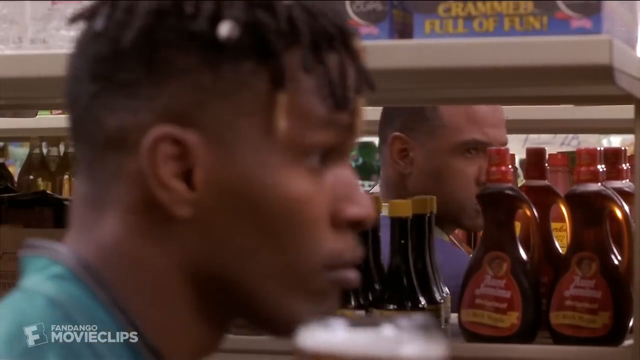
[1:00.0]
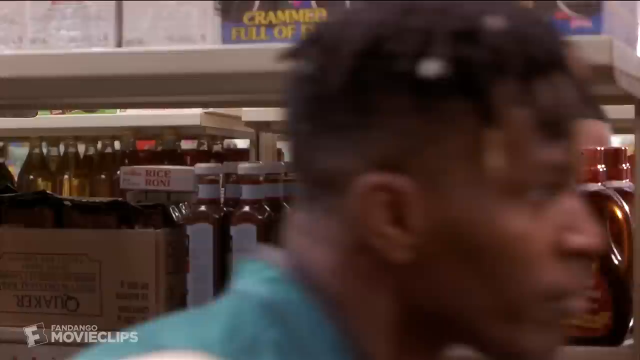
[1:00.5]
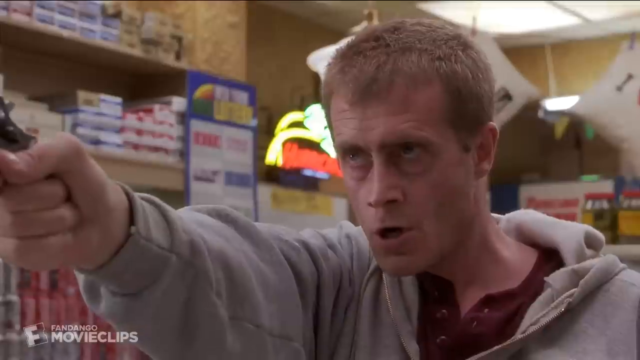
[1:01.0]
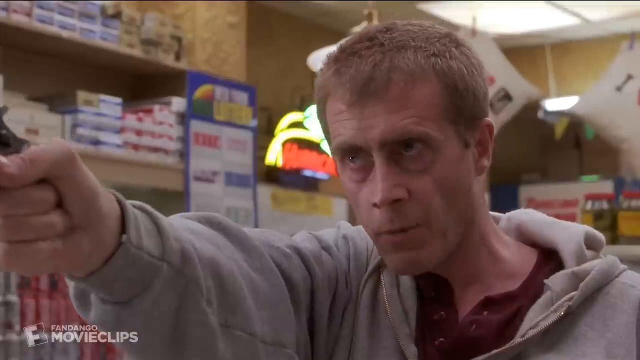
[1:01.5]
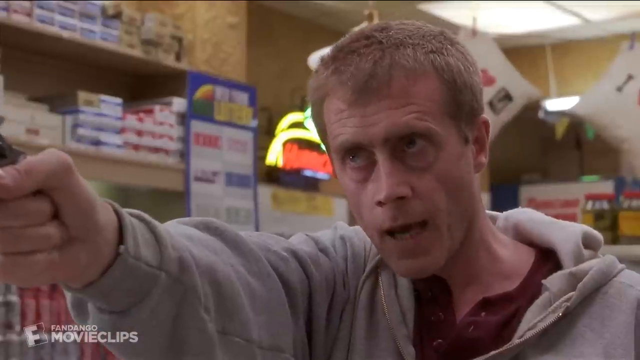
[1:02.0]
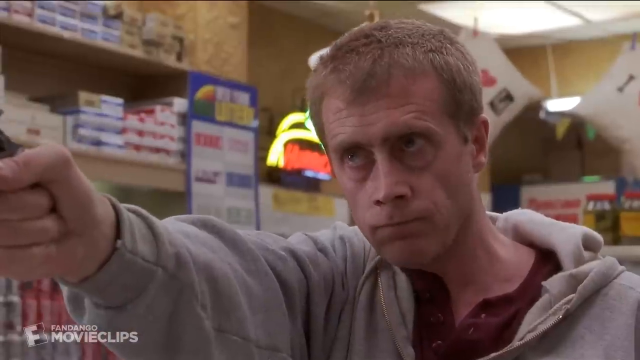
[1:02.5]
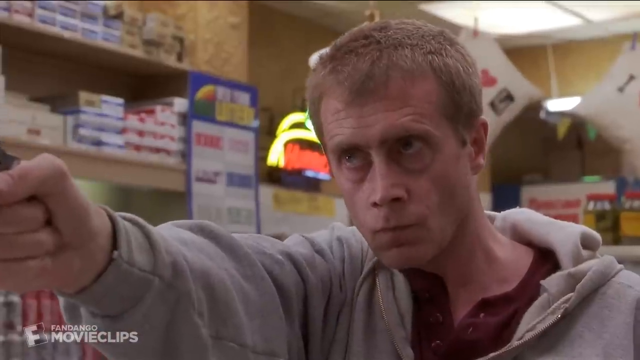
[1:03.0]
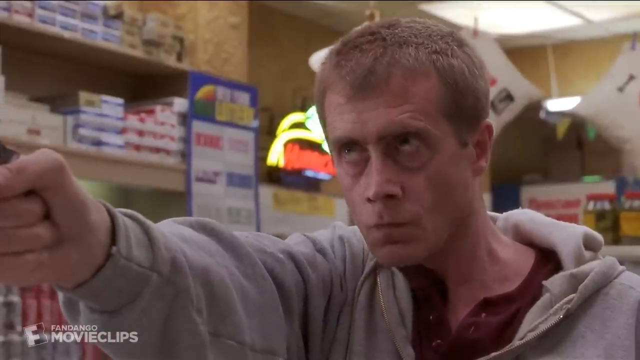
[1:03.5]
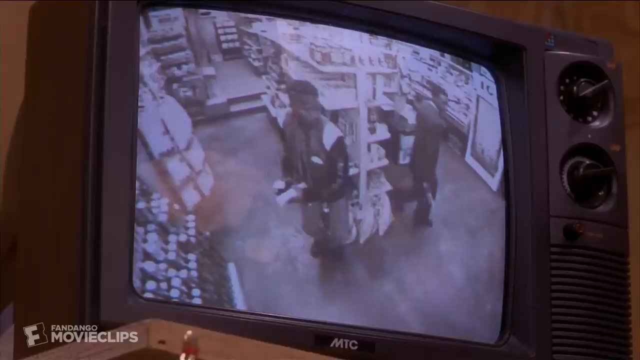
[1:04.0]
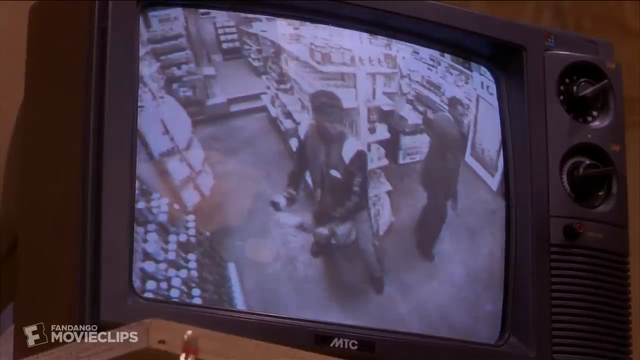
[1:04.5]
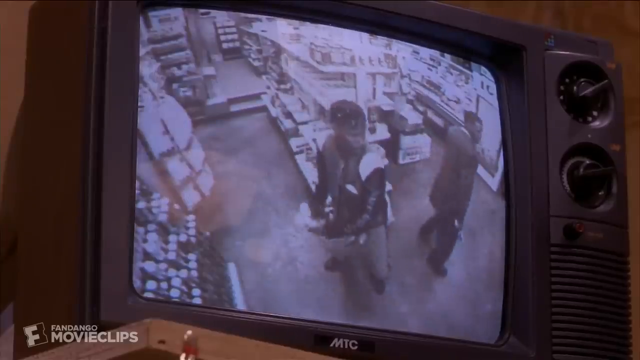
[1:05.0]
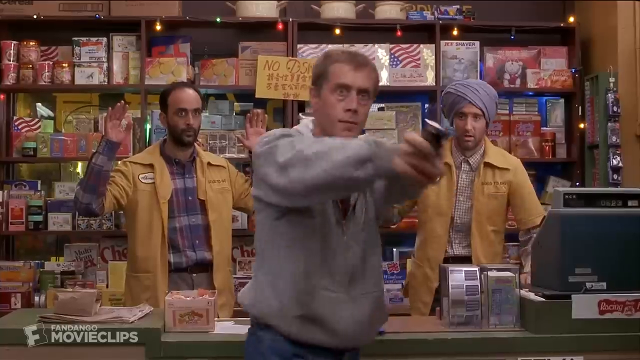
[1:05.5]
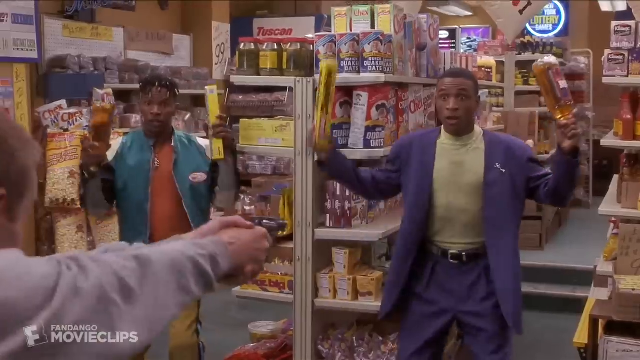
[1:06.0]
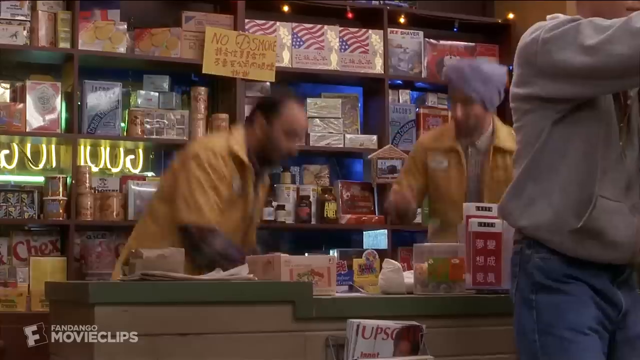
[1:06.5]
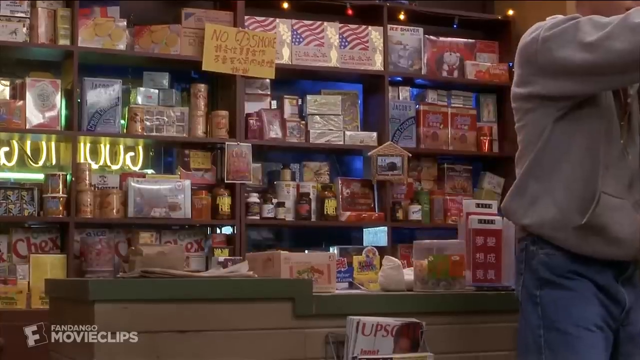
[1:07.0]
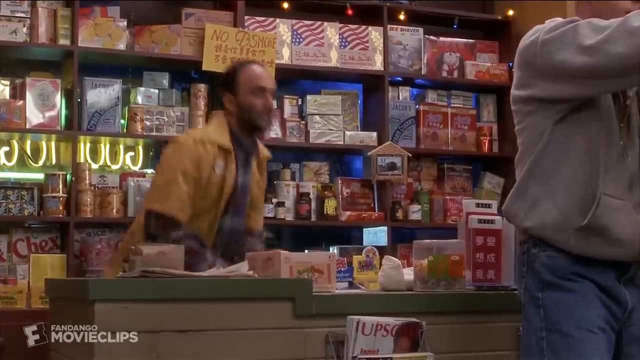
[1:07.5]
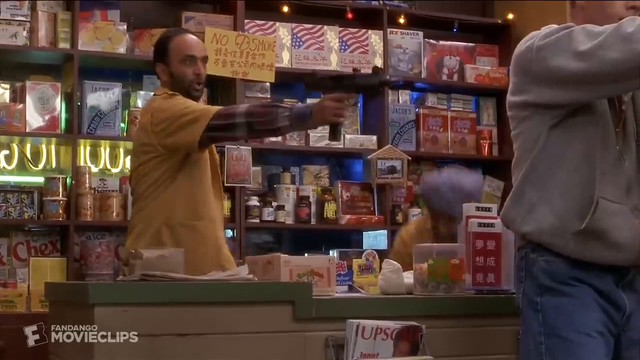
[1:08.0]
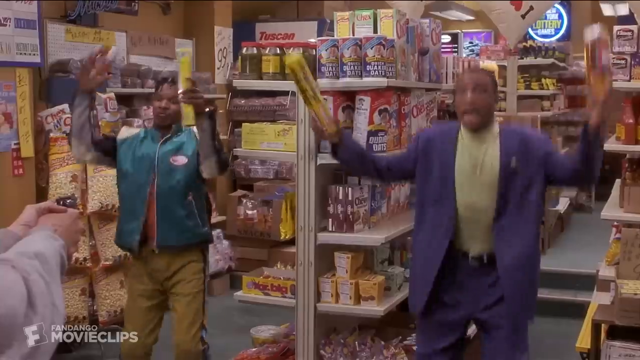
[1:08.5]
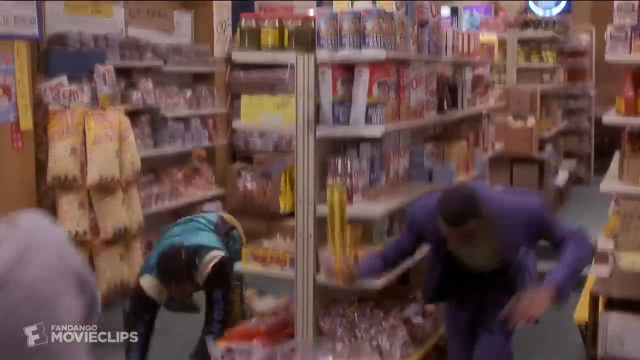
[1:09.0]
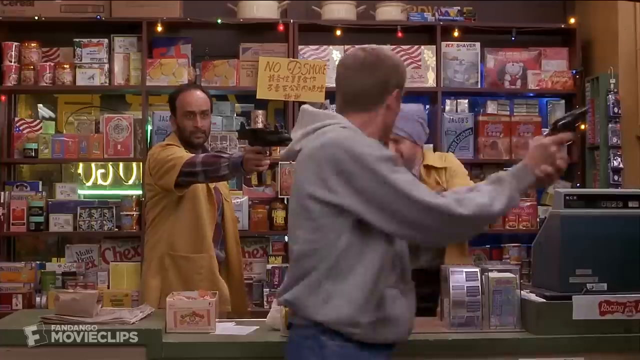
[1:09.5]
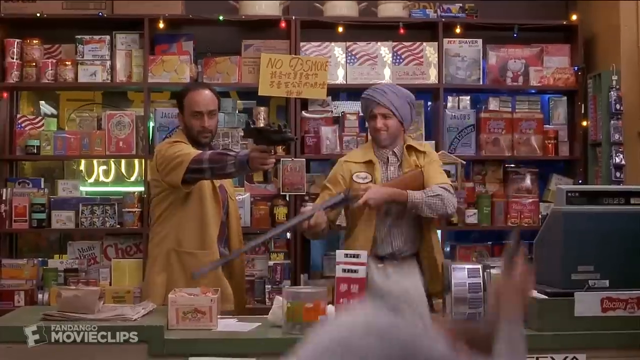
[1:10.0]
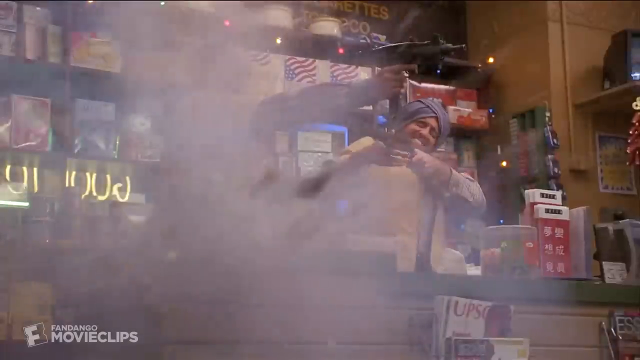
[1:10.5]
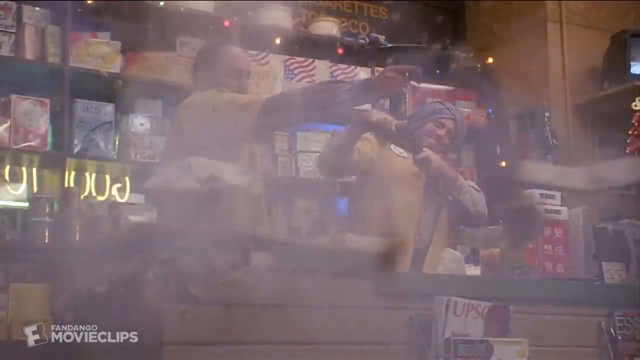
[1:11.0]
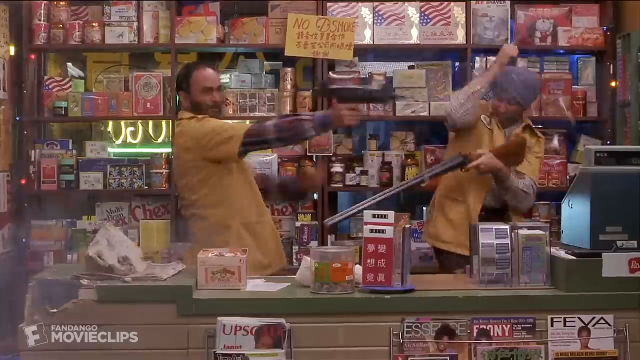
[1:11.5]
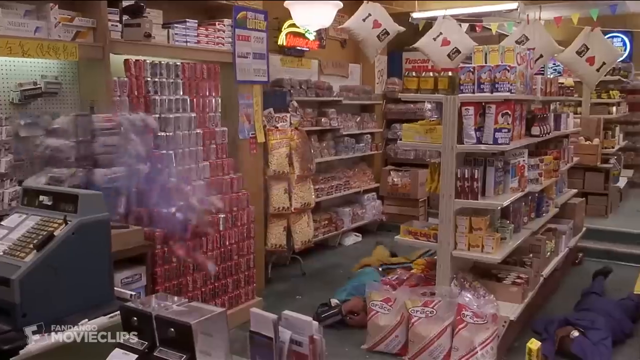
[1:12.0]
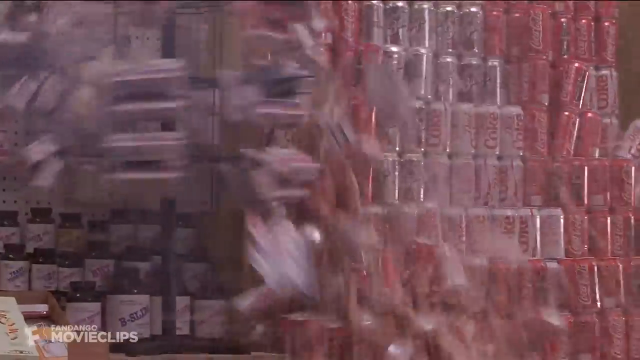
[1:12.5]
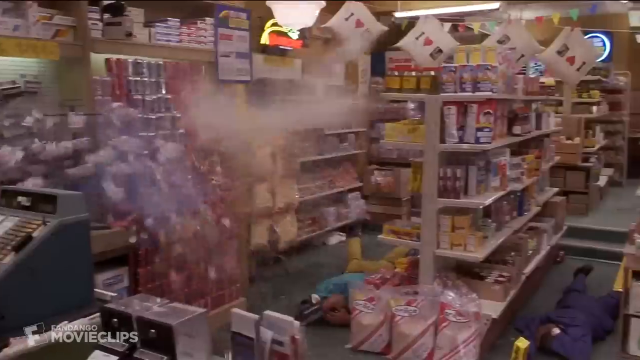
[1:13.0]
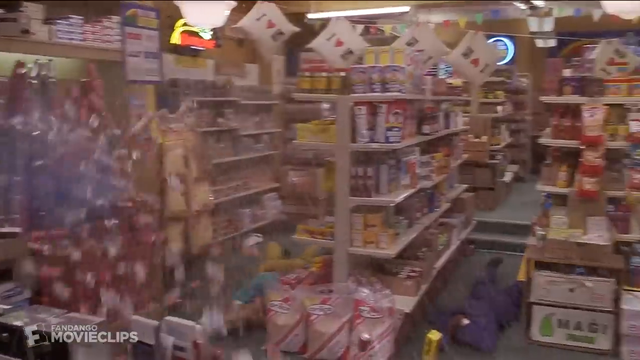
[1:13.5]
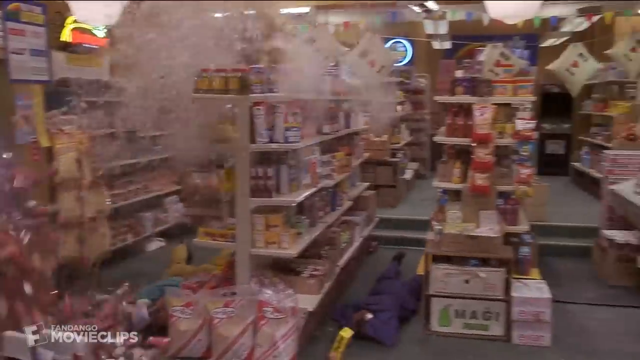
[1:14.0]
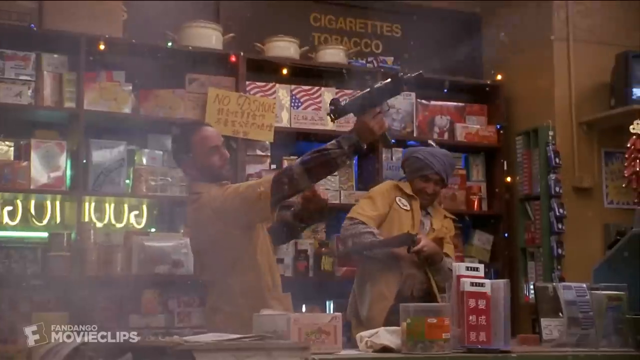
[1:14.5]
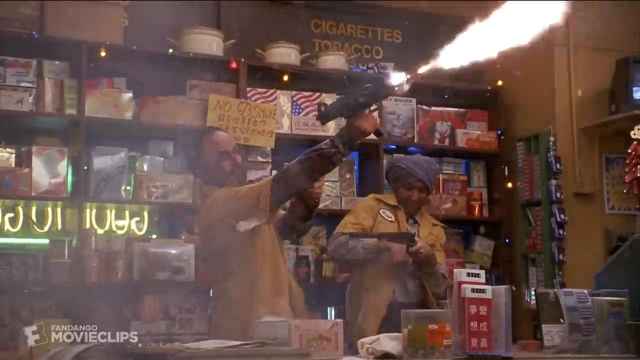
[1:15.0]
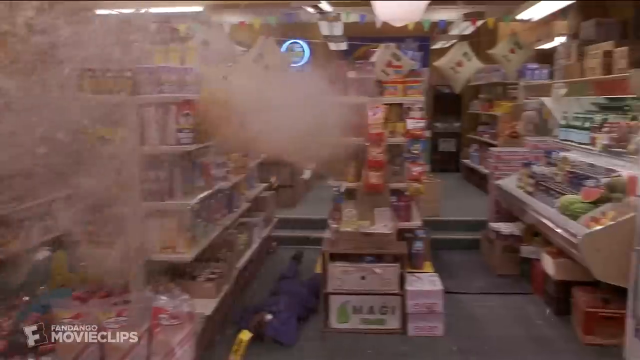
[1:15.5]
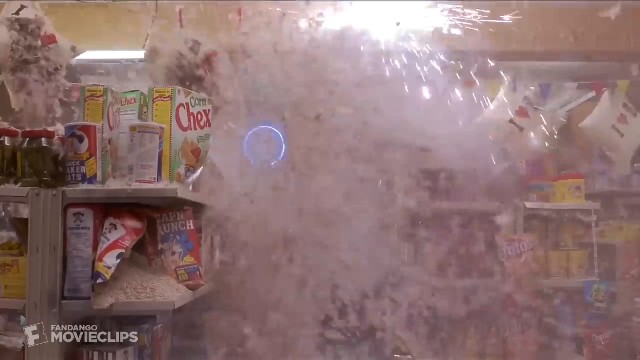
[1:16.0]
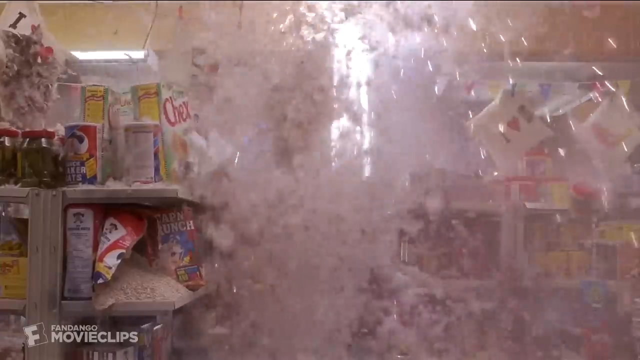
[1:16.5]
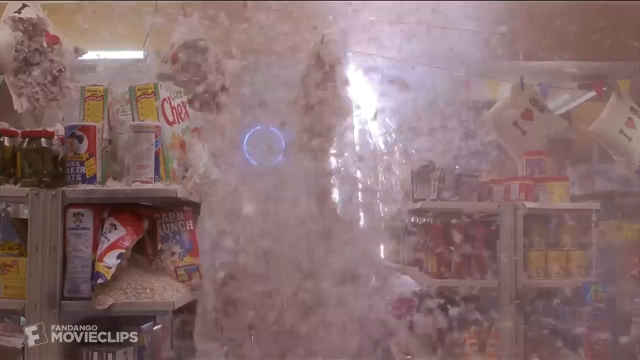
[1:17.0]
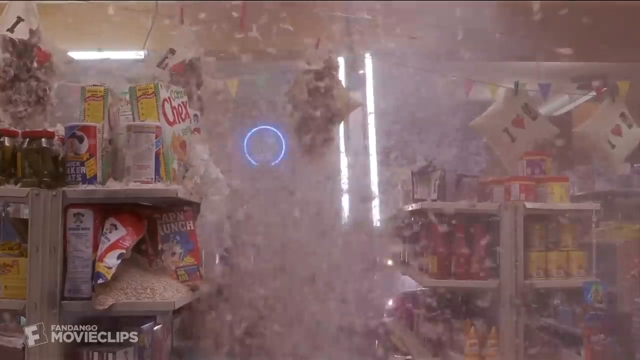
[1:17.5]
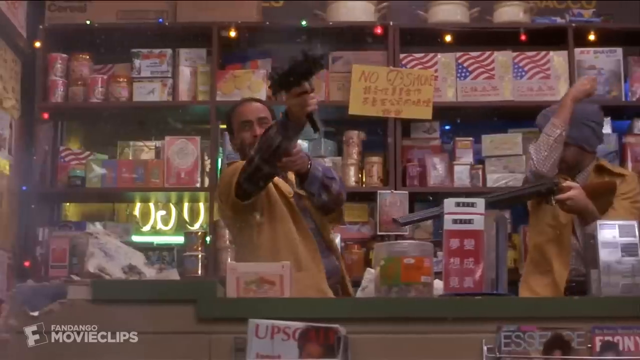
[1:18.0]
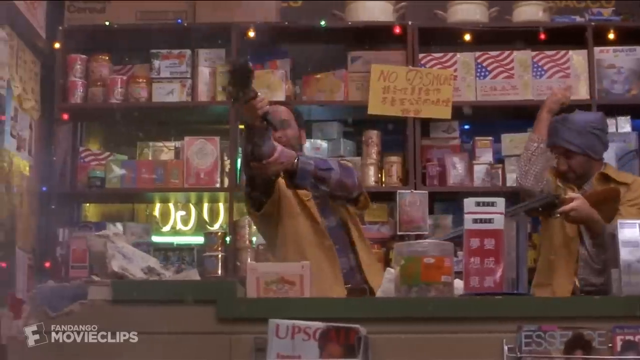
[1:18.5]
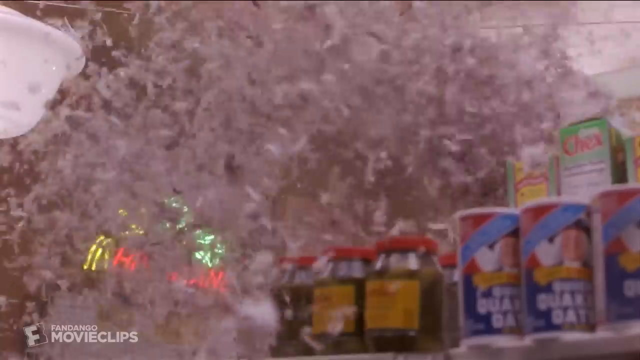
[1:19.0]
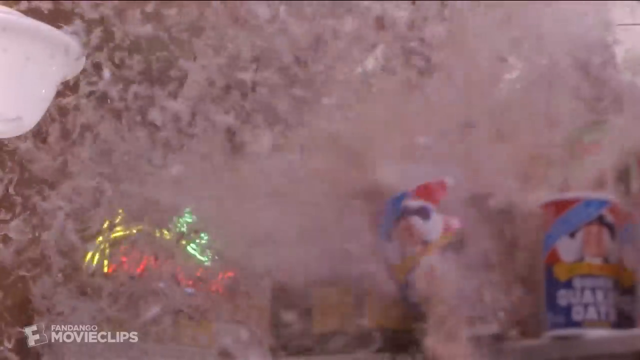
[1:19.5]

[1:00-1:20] The would-be robber sees the two black men on the camera and turns, looking their way and pointing a gun. At that moment the store owners go under their table, take out guns and start shooting wildly.